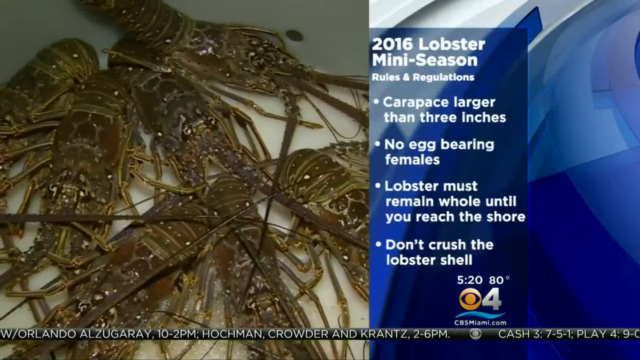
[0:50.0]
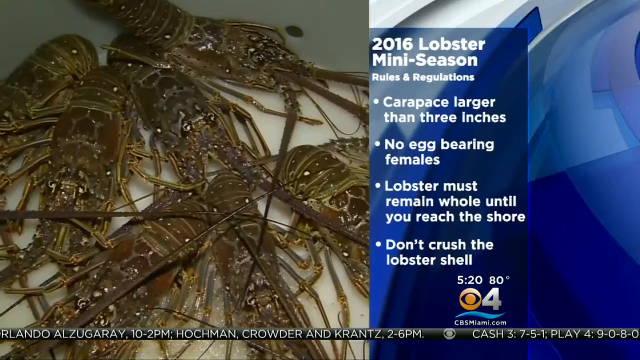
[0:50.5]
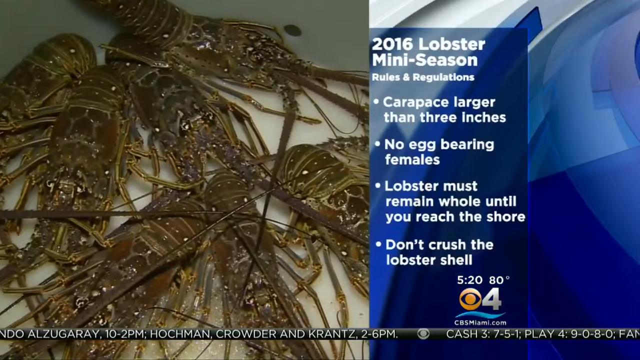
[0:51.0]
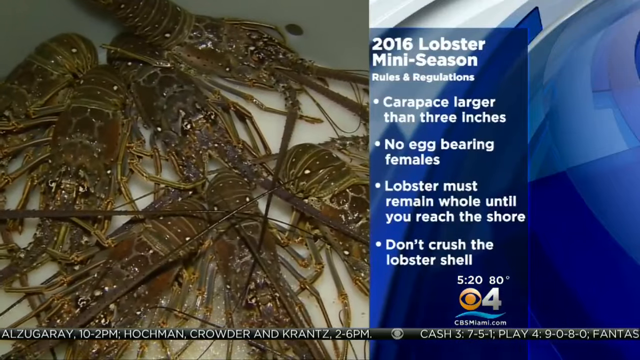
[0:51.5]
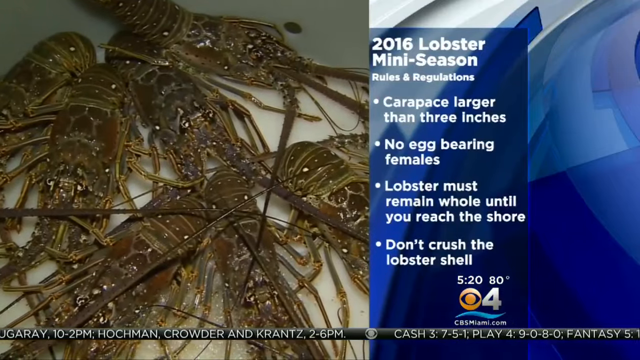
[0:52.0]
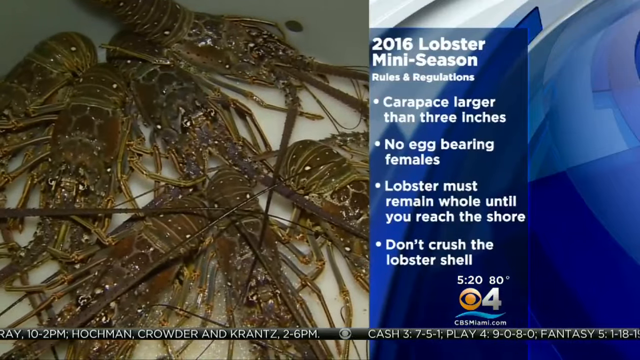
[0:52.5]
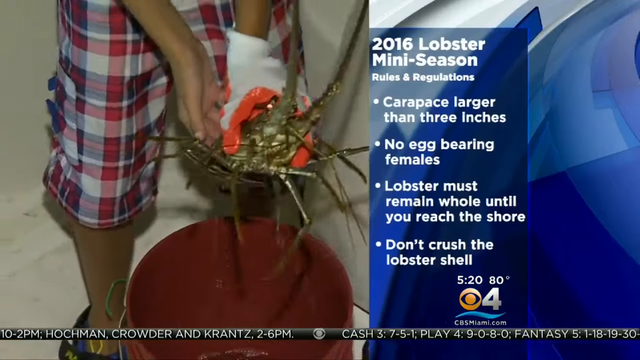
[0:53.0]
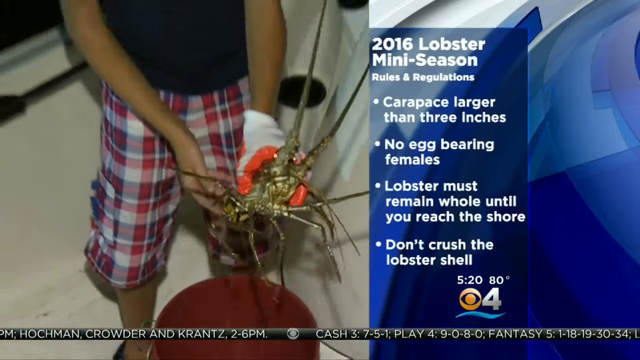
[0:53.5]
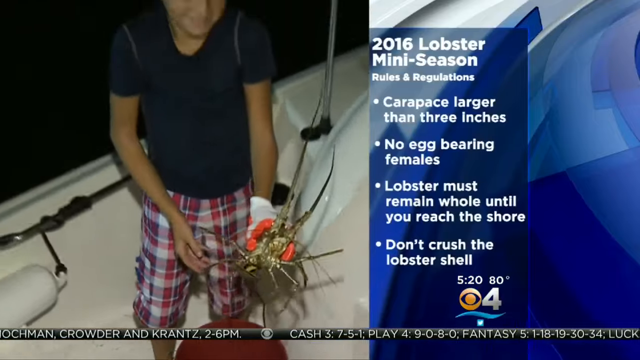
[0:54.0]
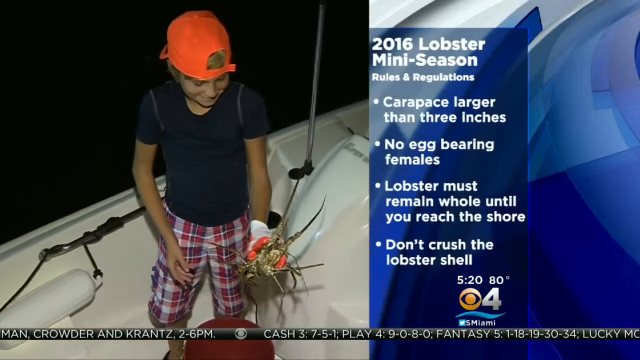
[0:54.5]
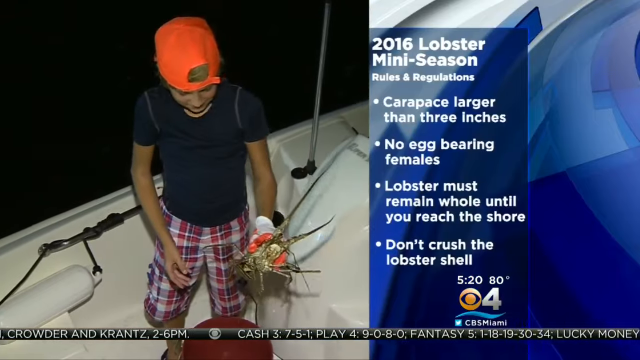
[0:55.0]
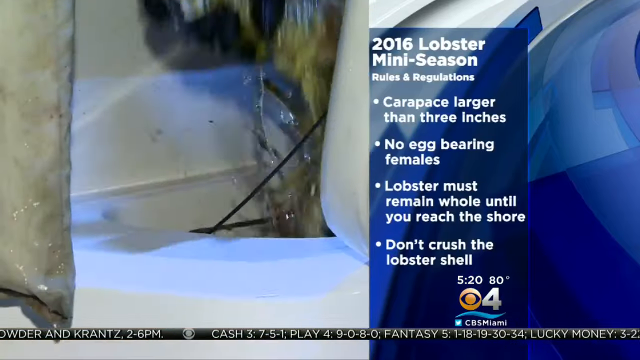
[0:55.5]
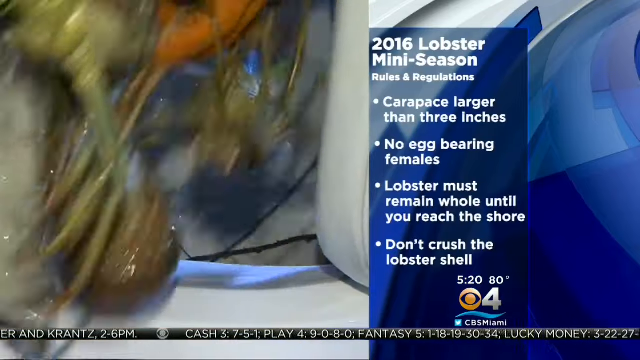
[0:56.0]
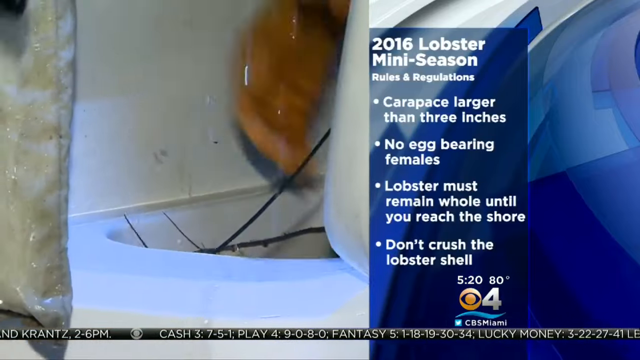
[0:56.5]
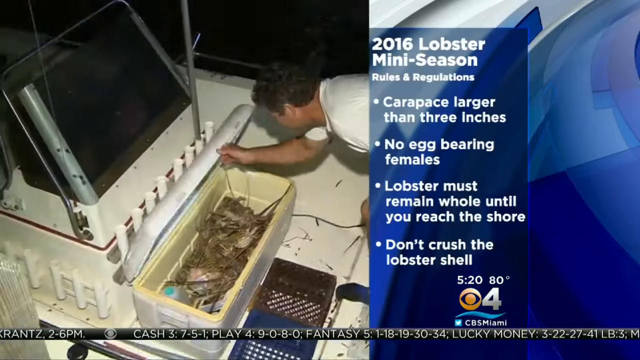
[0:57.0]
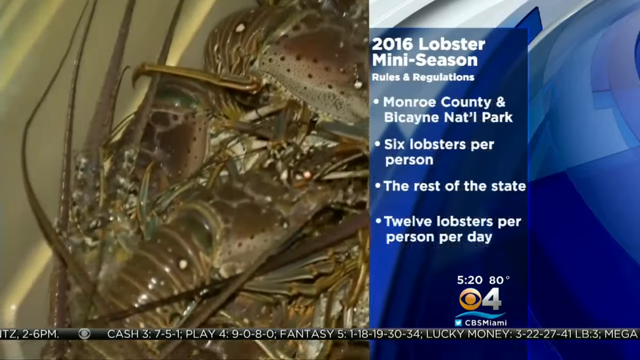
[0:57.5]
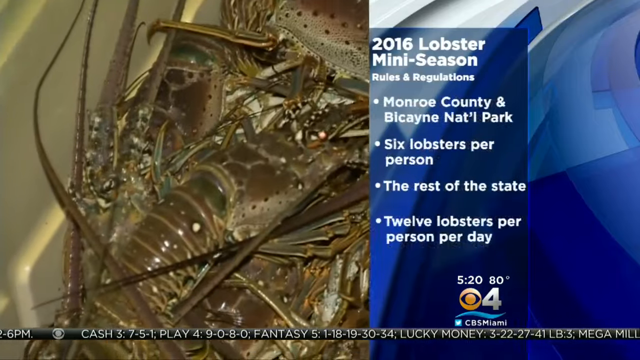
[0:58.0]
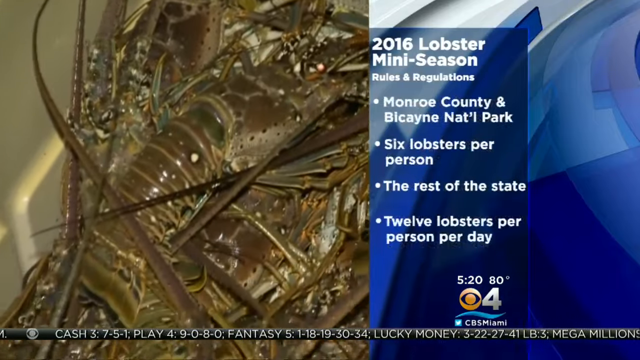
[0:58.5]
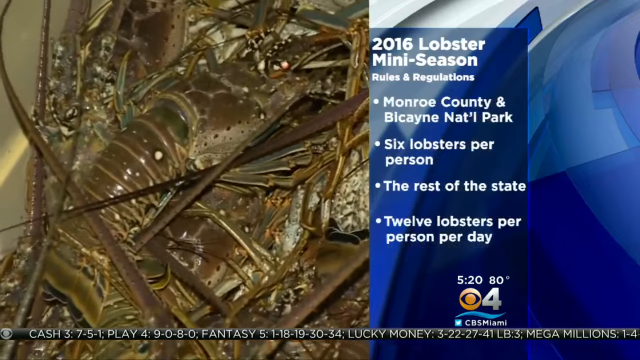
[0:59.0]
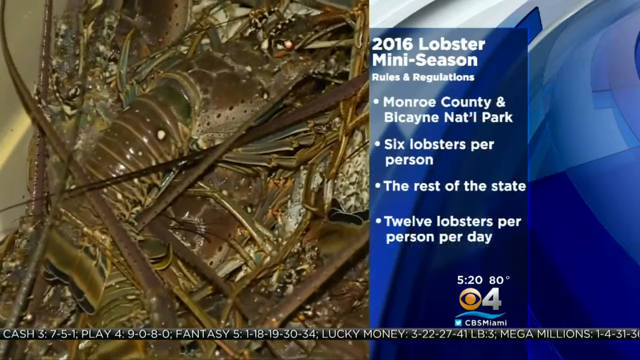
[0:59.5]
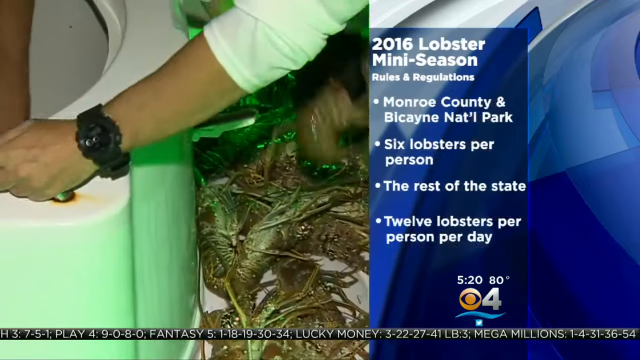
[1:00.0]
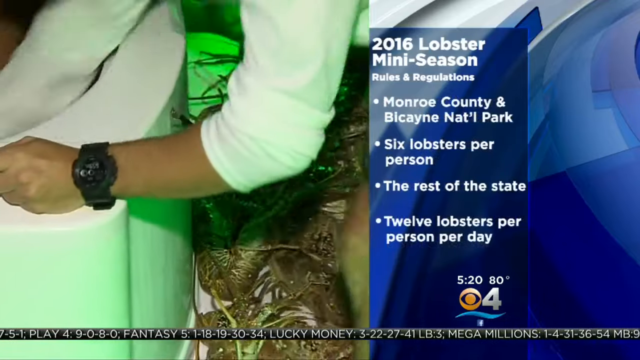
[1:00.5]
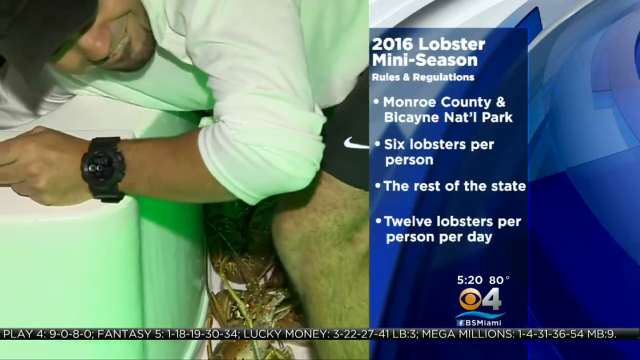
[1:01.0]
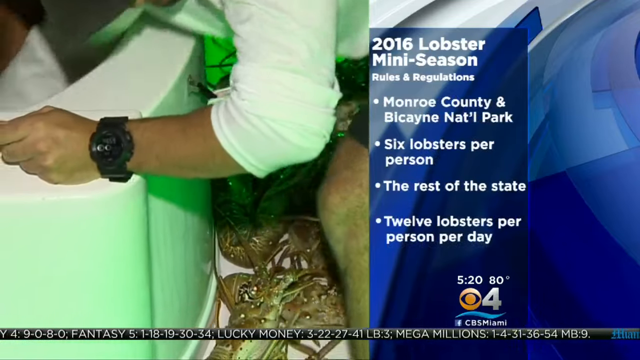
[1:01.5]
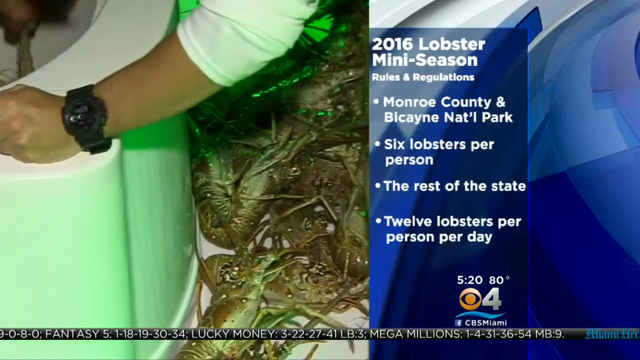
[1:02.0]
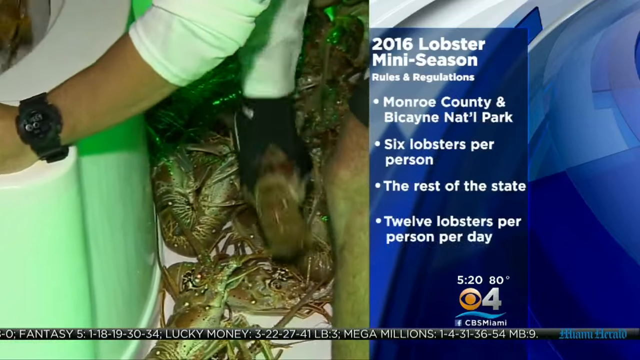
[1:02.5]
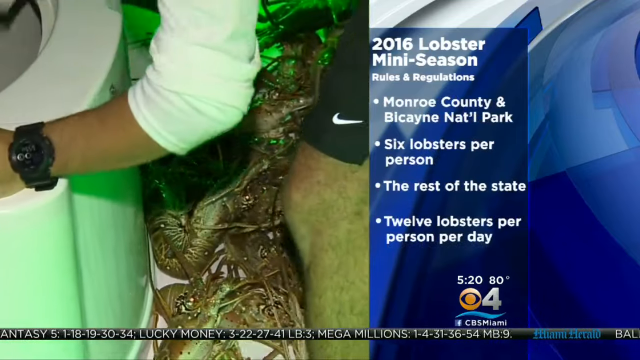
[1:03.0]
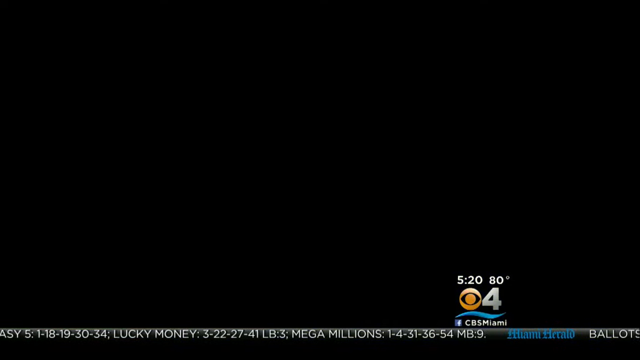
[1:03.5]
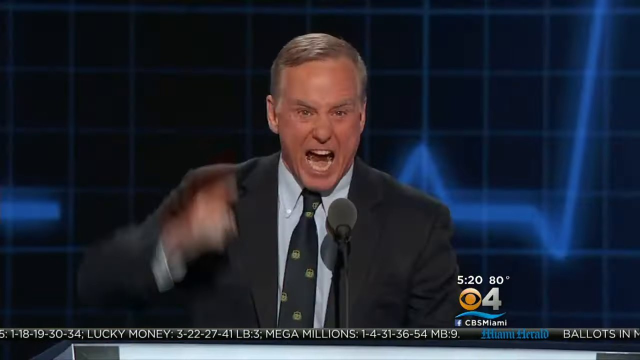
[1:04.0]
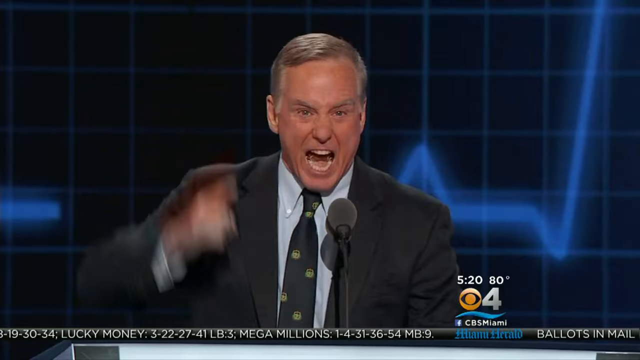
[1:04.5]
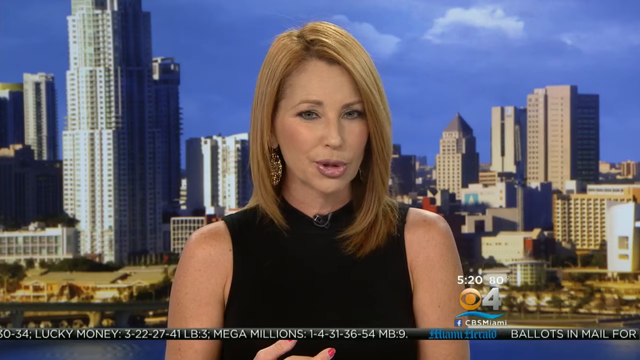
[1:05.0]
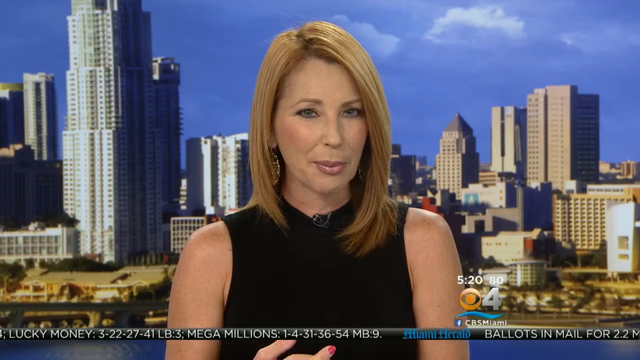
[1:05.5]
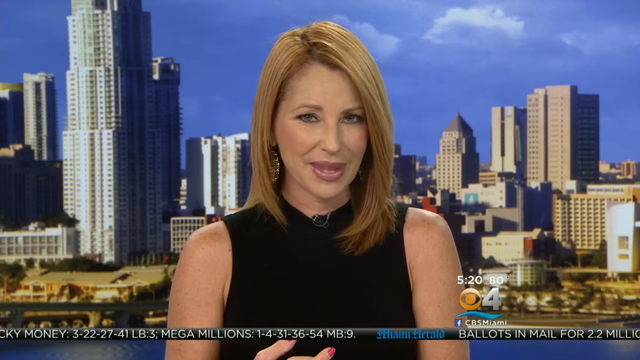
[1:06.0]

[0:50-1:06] A man holds up his hand in a way that suggests he may be wary of the lobsters, which look like crabs but not exactly. A lady is smiling. A man wearing a cap backwards, shorts and a black t-shirt picks up the lobsters and appears happy.